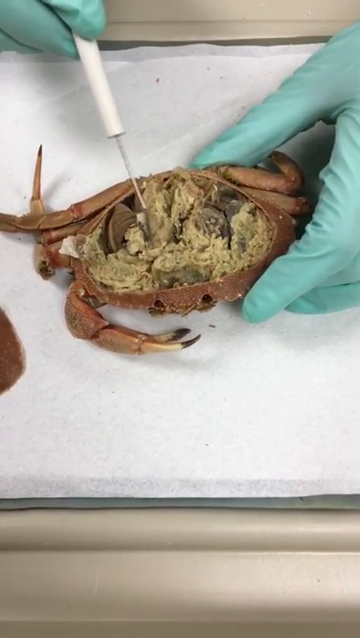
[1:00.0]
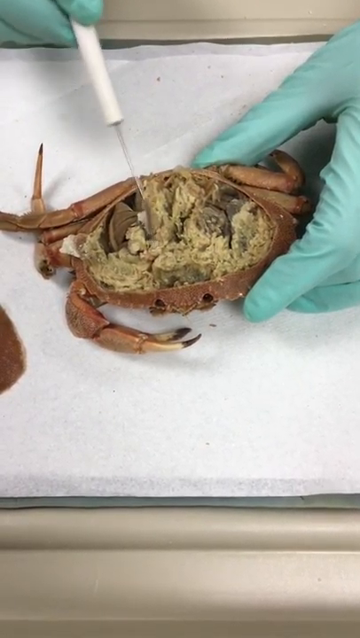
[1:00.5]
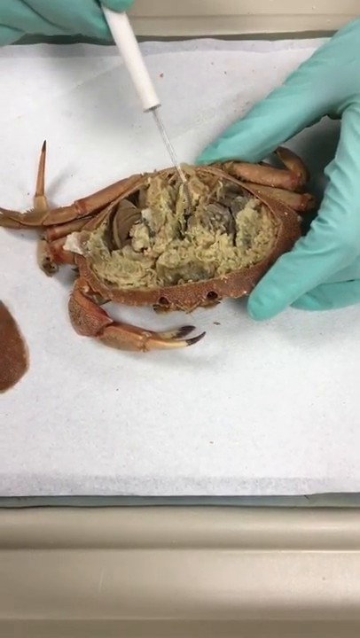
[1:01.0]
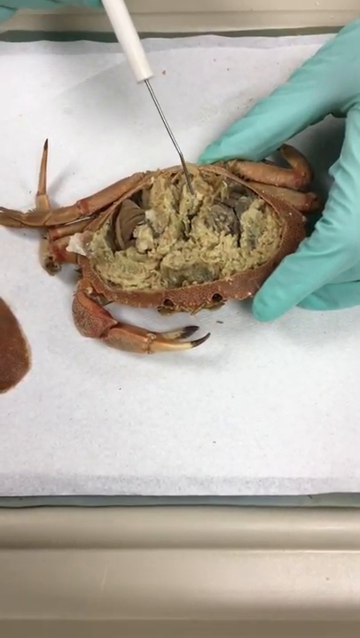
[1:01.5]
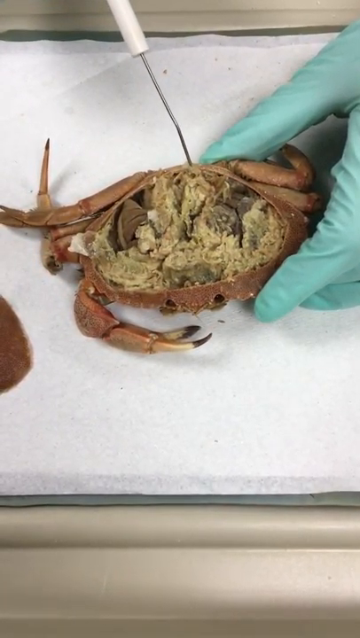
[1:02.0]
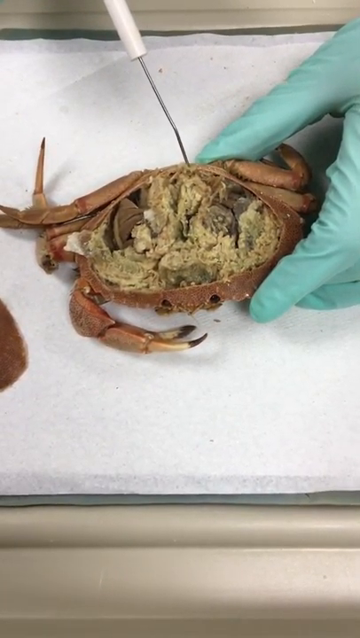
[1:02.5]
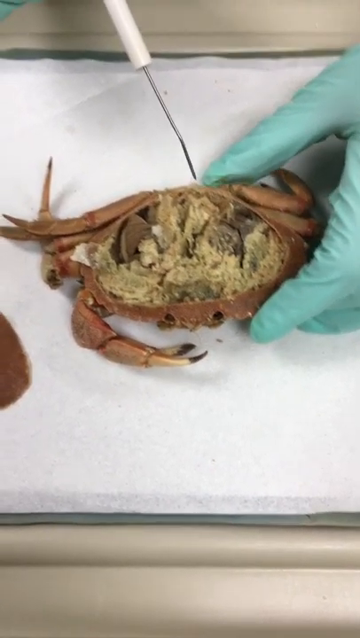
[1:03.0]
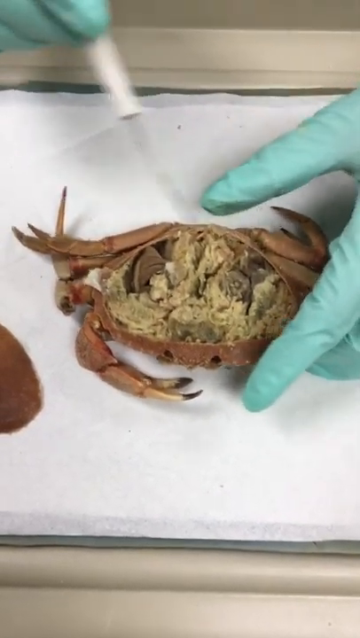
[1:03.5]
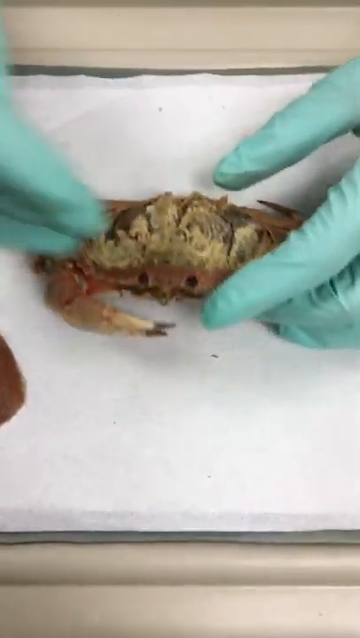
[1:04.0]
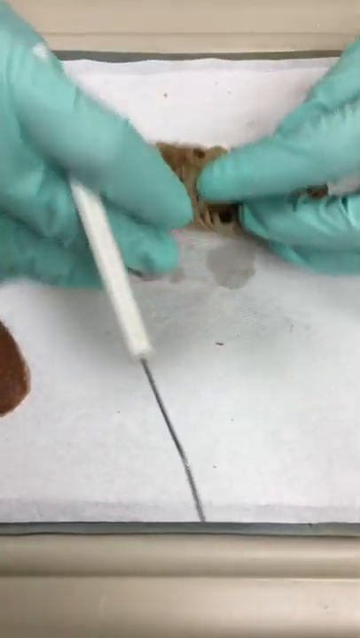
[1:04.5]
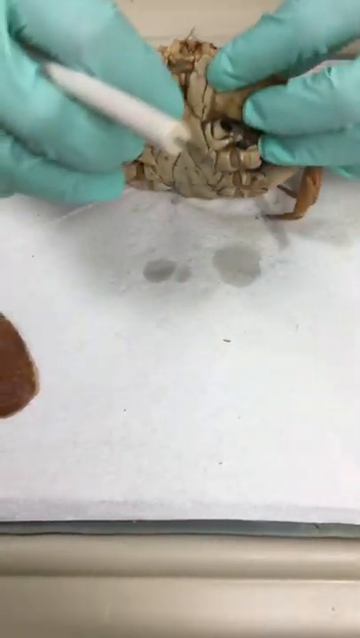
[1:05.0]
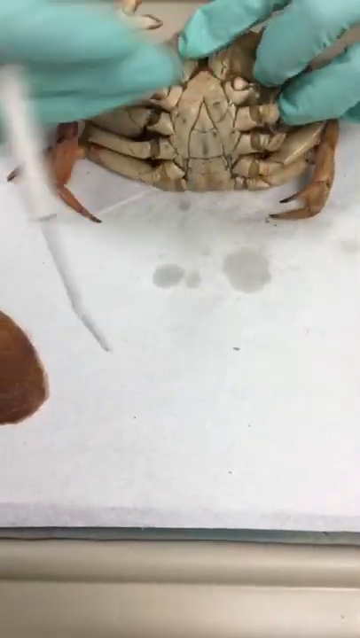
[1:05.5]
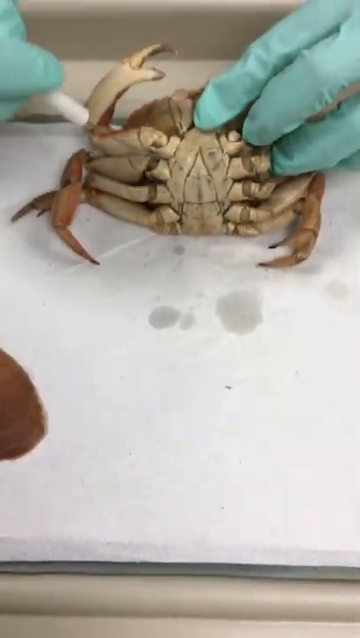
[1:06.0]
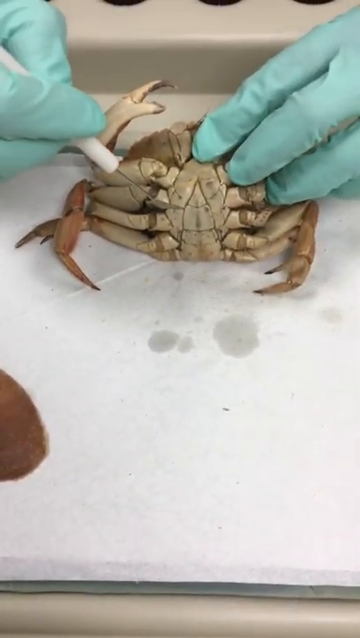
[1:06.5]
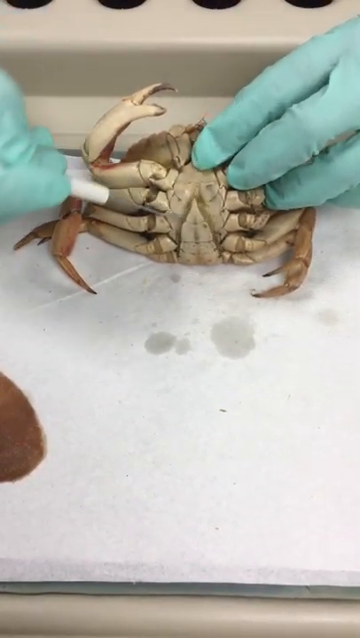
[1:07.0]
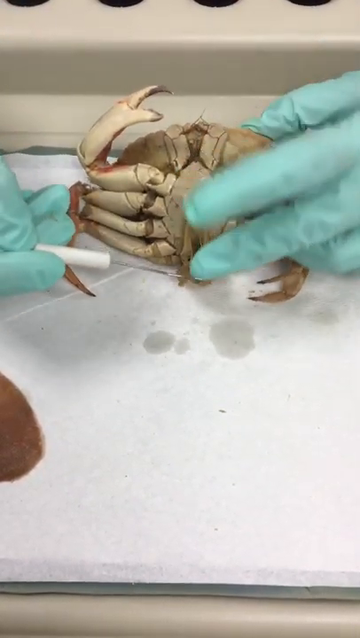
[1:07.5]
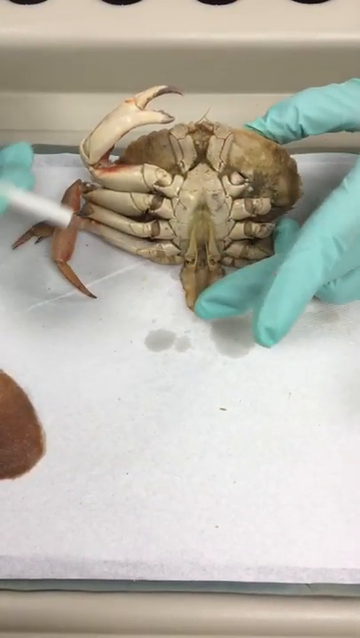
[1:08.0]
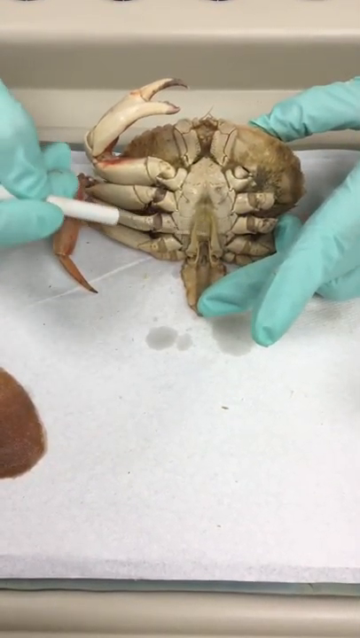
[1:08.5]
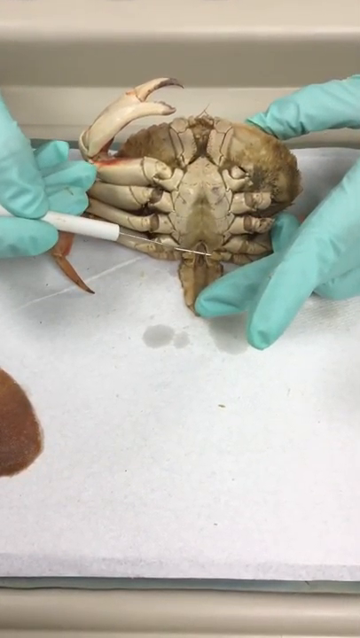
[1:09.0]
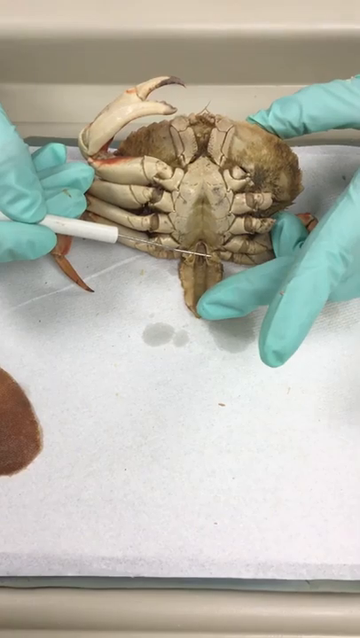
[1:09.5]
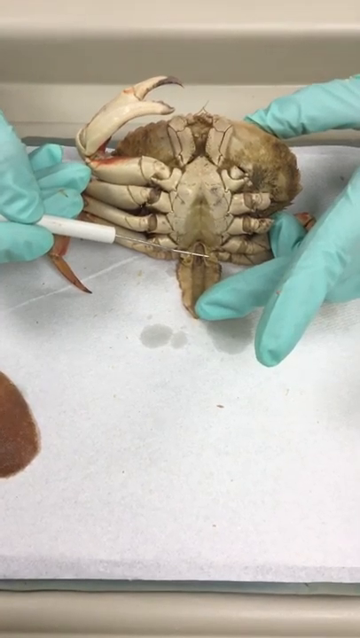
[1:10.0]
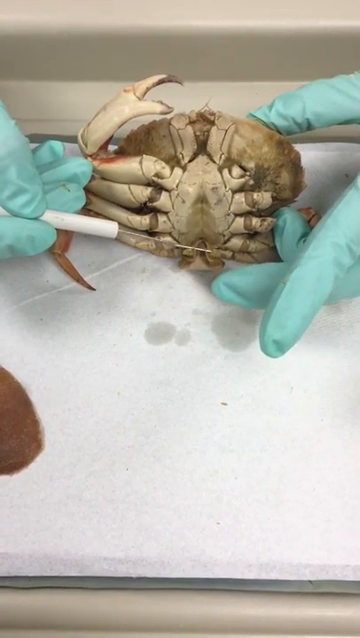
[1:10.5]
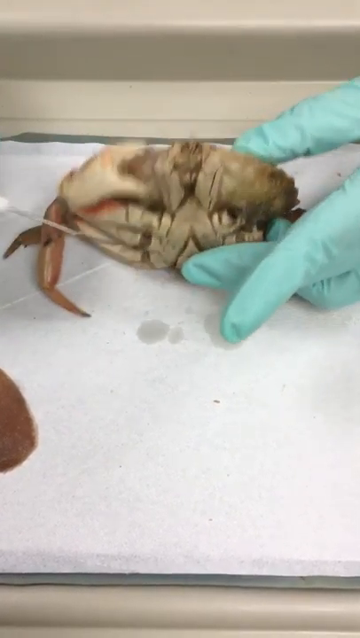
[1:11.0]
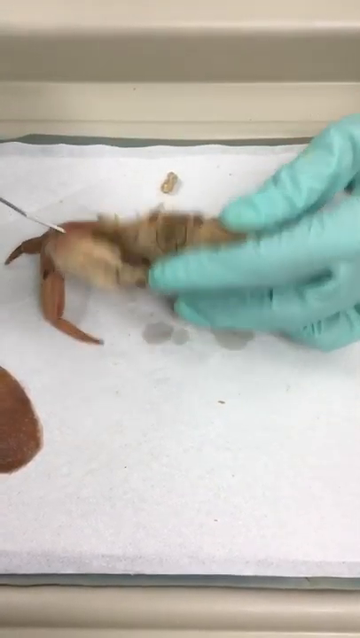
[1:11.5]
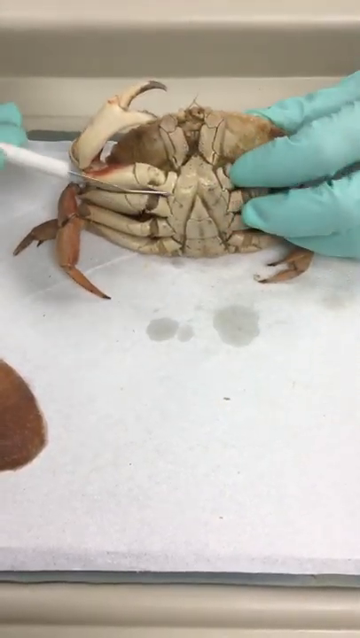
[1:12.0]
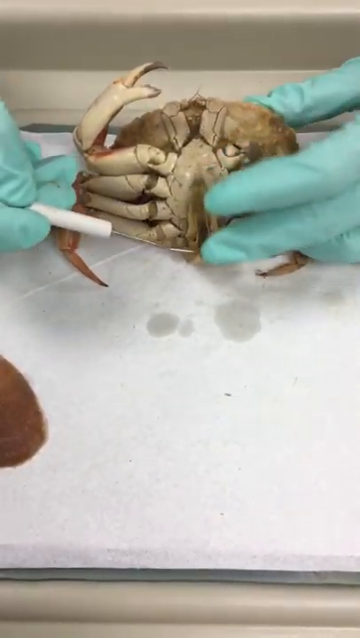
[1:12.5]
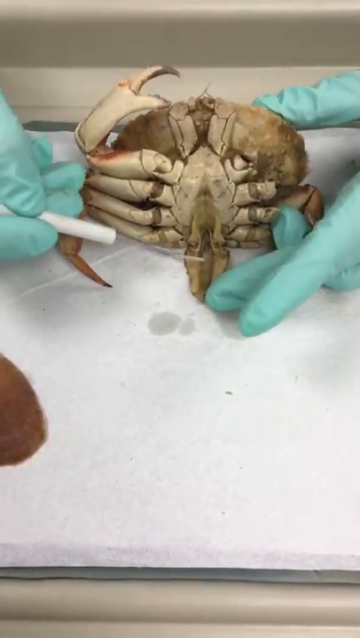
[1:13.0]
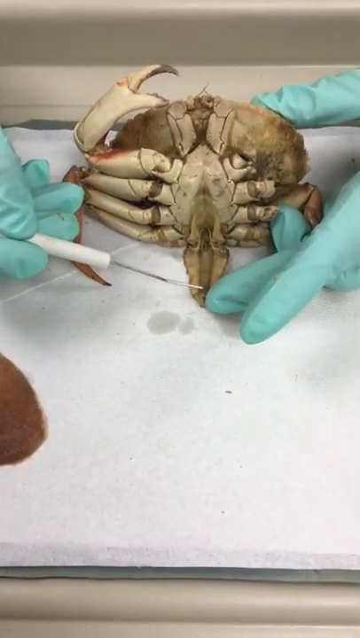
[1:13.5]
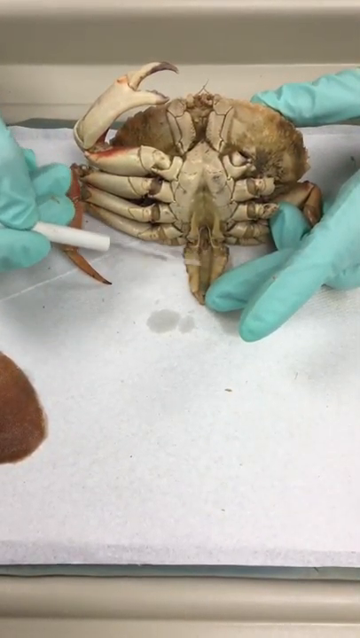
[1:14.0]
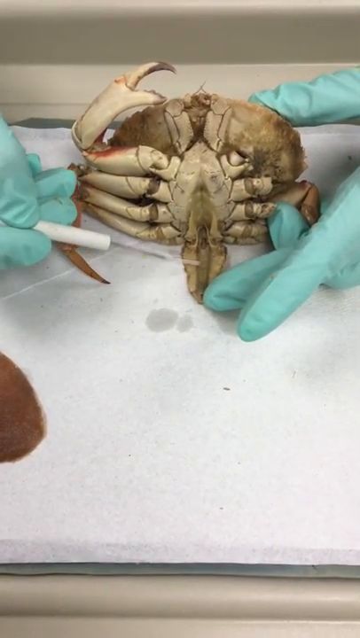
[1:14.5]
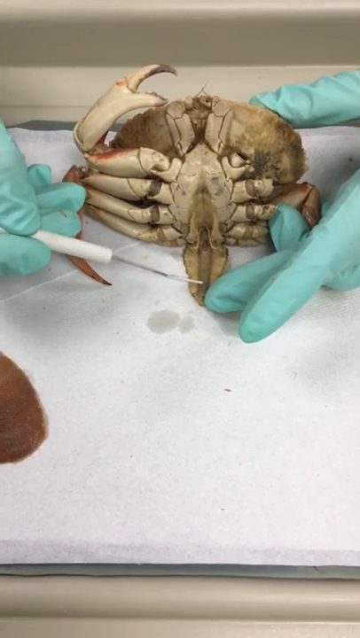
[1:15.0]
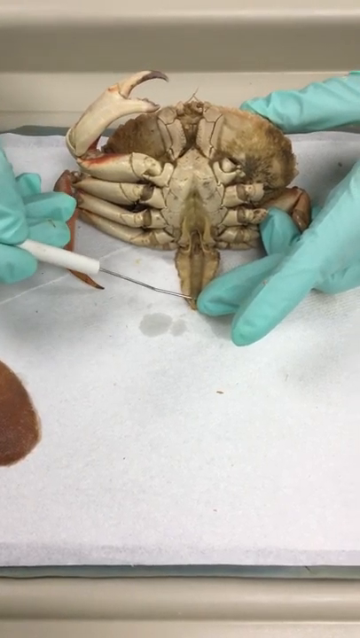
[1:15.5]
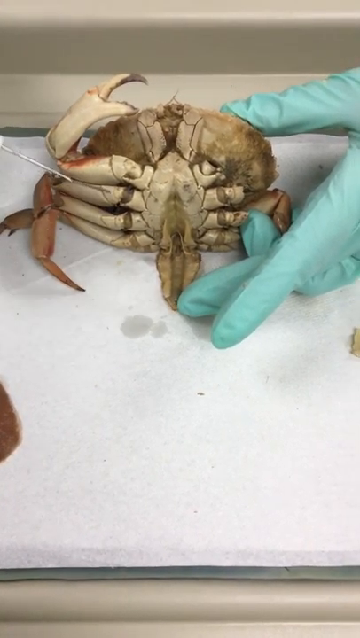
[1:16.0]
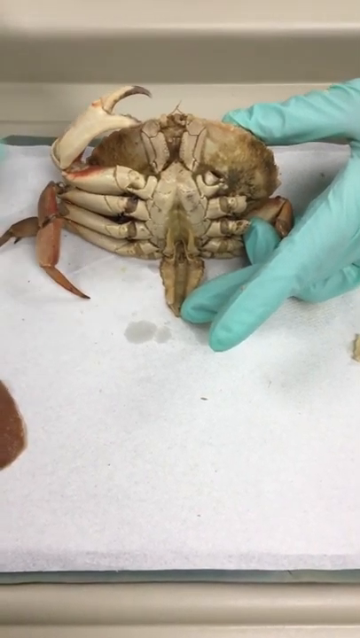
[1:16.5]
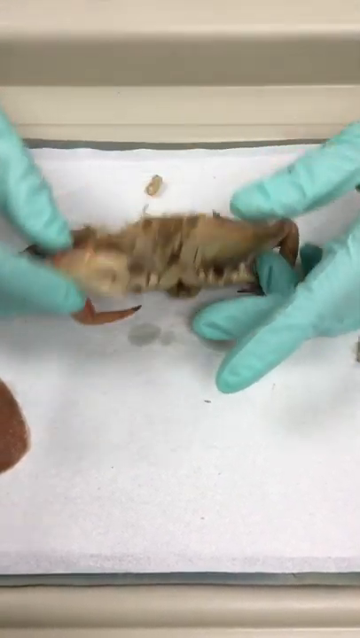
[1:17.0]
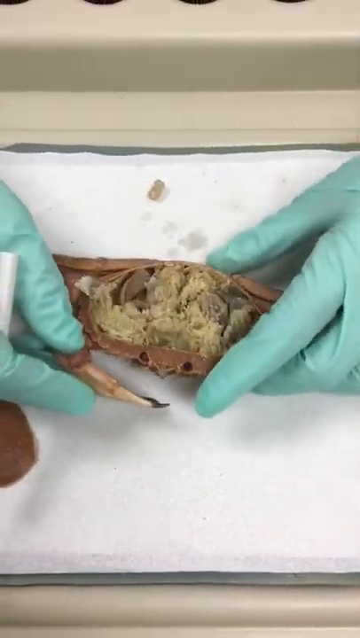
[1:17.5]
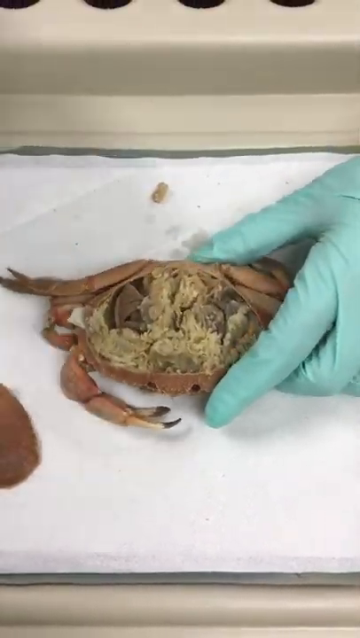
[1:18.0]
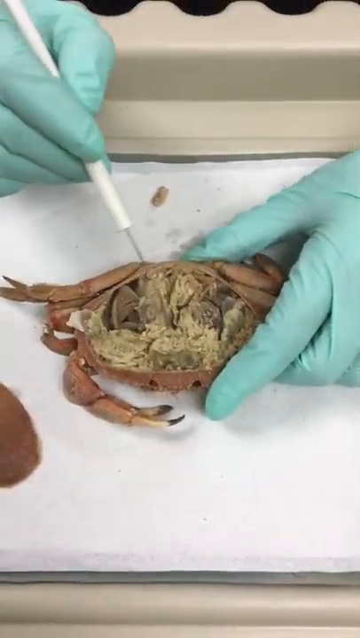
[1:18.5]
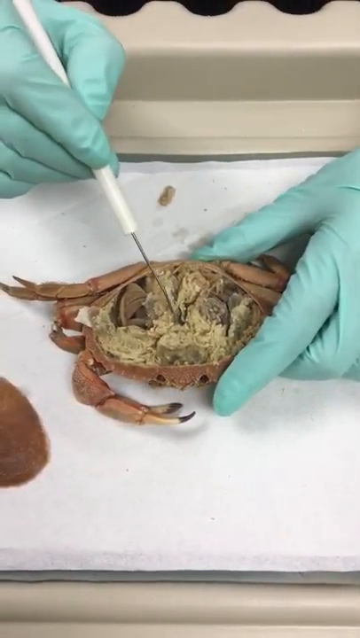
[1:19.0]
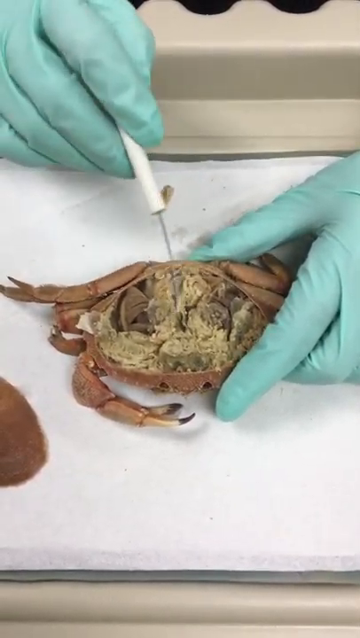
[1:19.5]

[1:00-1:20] Two gloved hands in light teal gloves dissect a little red crab. The left hand holds the crab itself while the right hand holds a tool used for poking around and pulling things apart. The left hand lifts the crab up to expose the underside, and the right hand, with its tool, pokes and prods the underside of the crab's carapace. Little folds open, showing additional tiny little legs on the underside, and the area where each of the legs attaches to the crab's body is shown. The crab is then turned back over and the hands explore inside the tissue at the top of the crab. The crab faces the viewer; its eyes are small, round and black, visible in the front center of its head. It is seated on a white absorbent type of paper on top of a tan-cream table. The crab's claw has black tips.